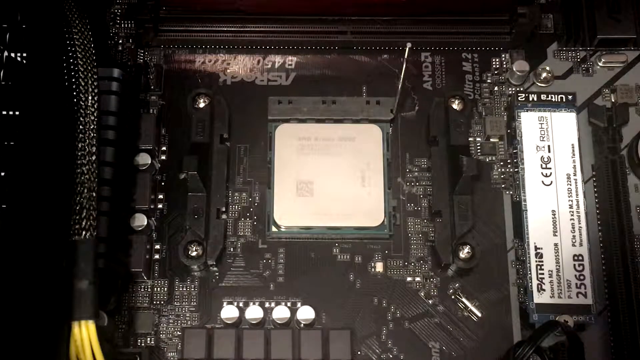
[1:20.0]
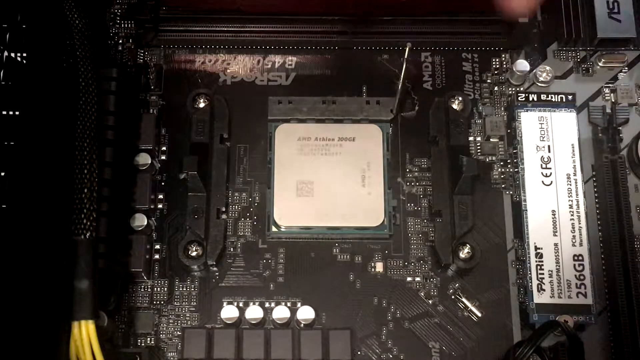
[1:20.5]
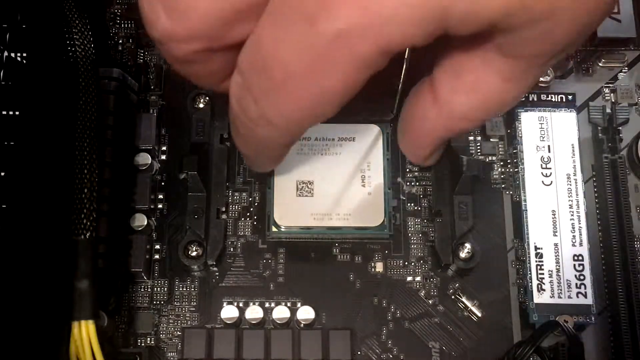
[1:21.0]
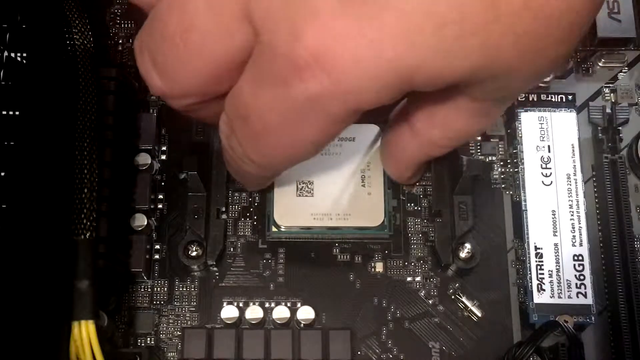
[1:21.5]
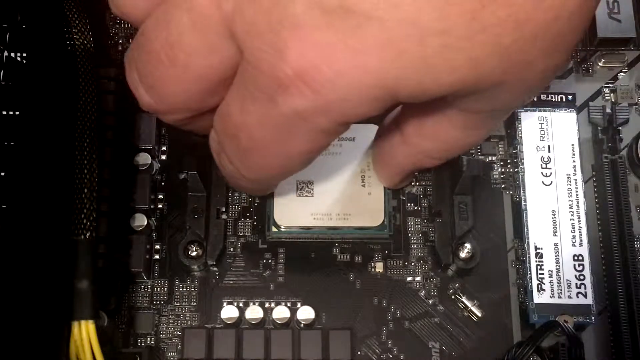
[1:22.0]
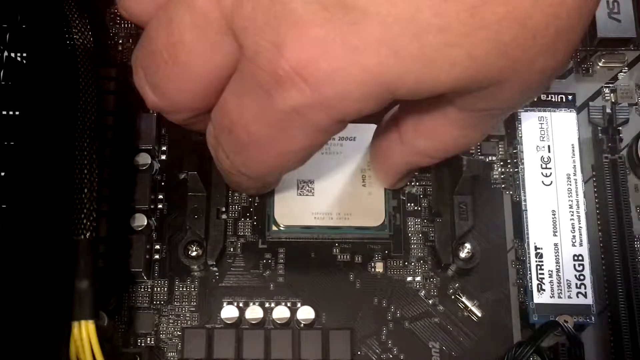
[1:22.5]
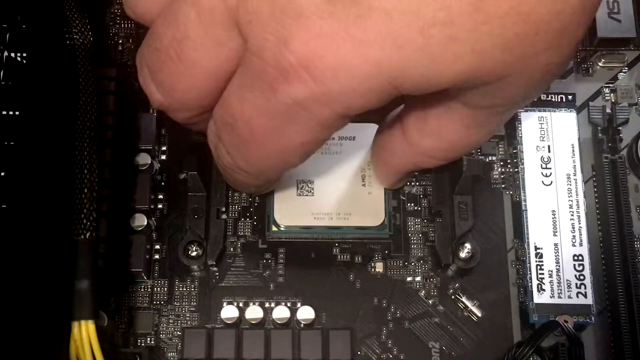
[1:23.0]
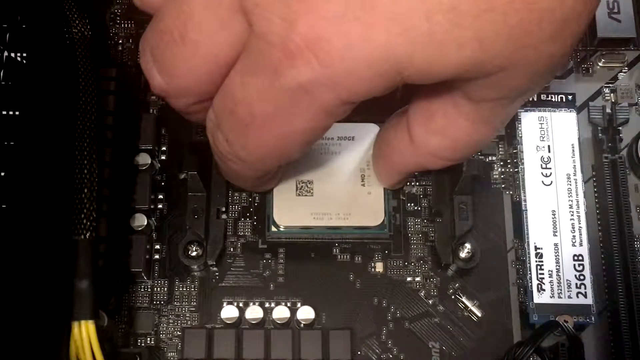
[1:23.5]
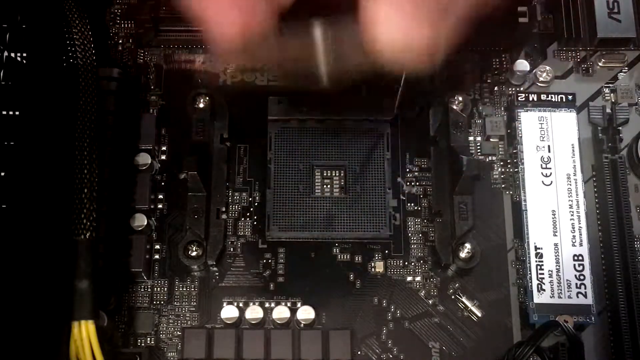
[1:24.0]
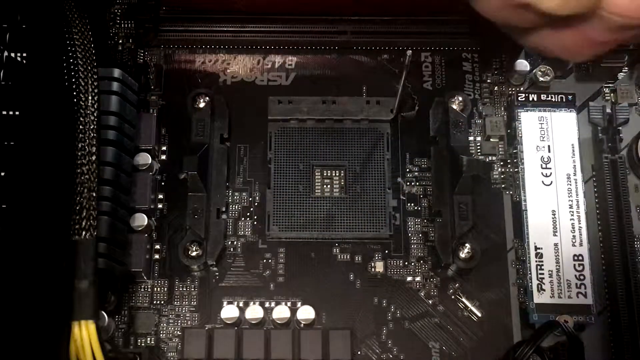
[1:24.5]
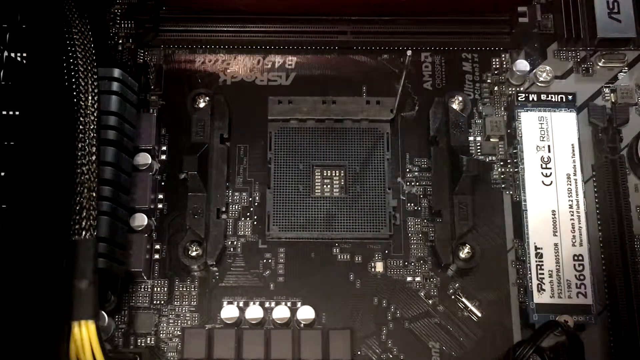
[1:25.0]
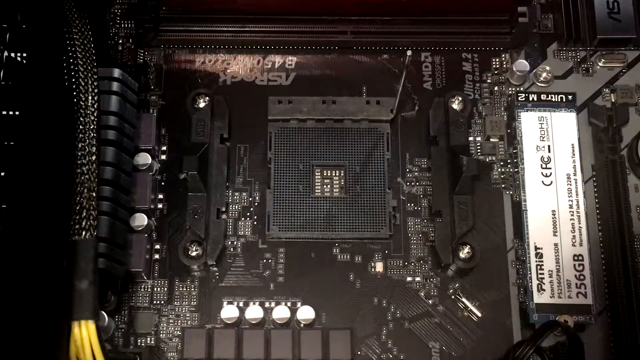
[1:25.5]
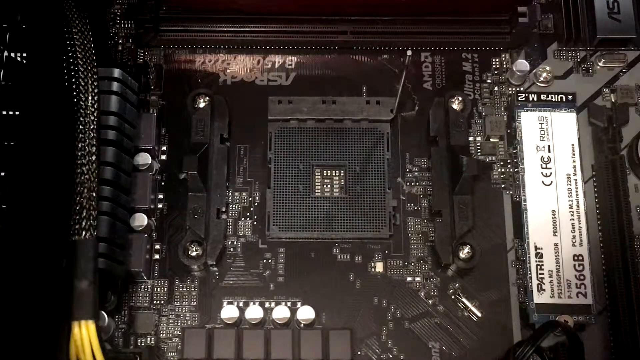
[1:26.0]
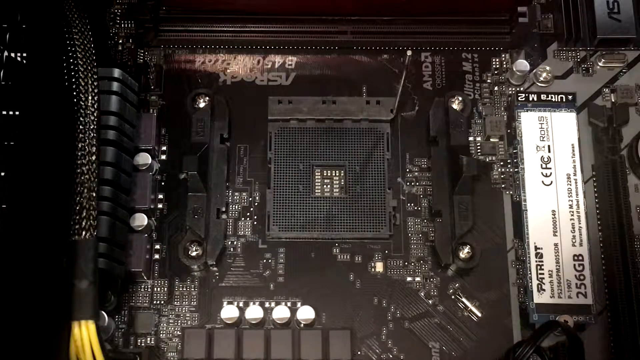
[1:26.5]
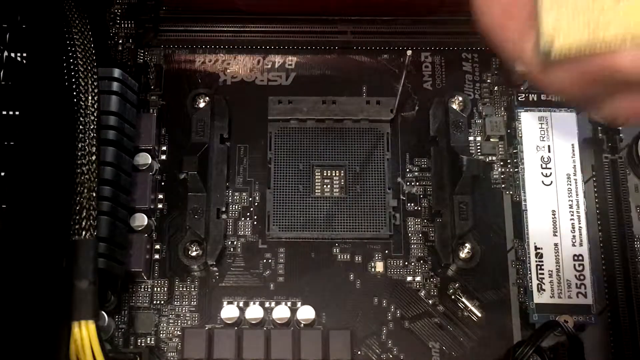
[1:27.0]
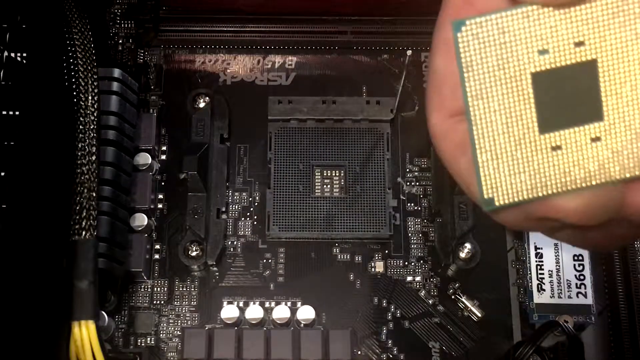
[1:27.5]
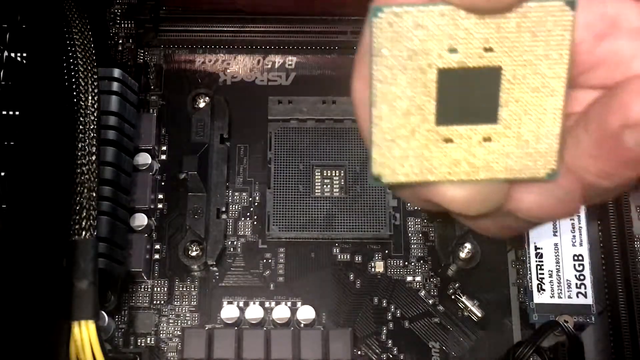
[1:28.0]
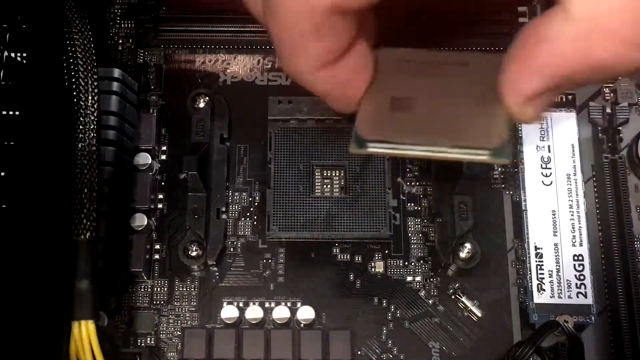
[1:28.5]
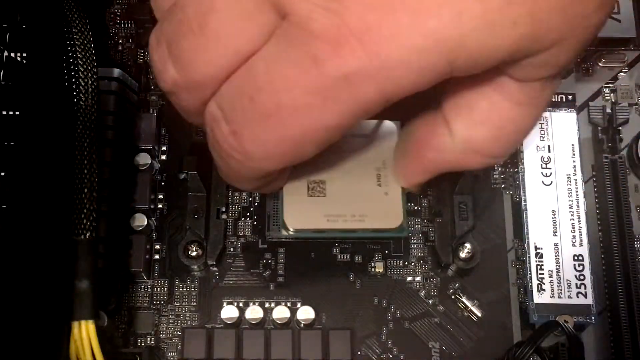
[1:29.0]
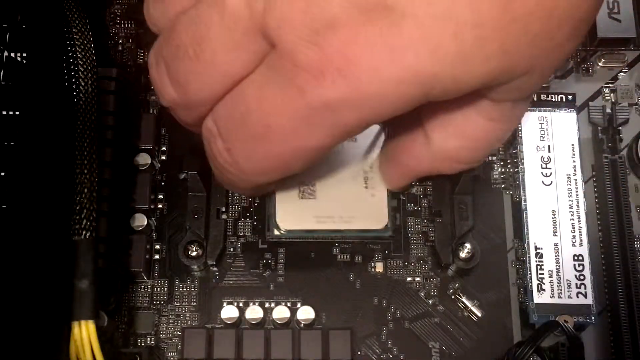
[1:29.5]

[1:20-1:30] The man seems to place his right index finger on the left of the CPU and his thumb on the right of it to pick it up. He slowly wiggles it and pushes it up, taking it out of the frame and leaving only the motherboard area where the CPU was placed, which looks like a black grid. His hand then comes back into the camera, still holding the CPU in his right hand the same way he took it out, now showing the back of the CPU with its golden pins. He now seems to be placing it in.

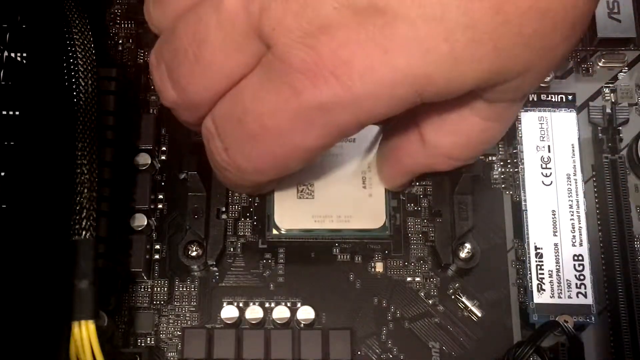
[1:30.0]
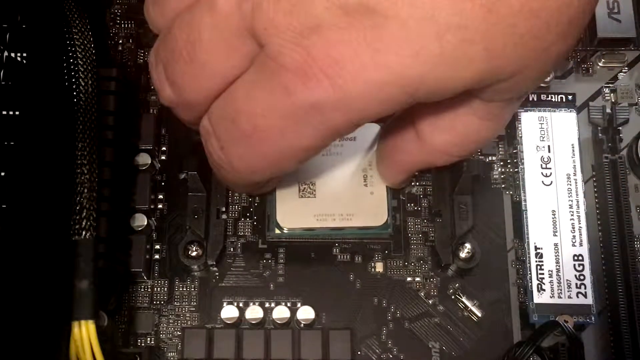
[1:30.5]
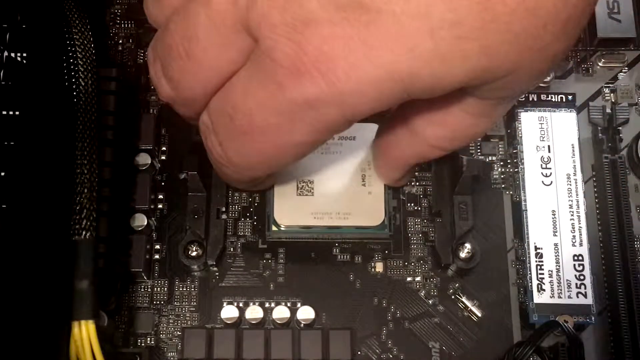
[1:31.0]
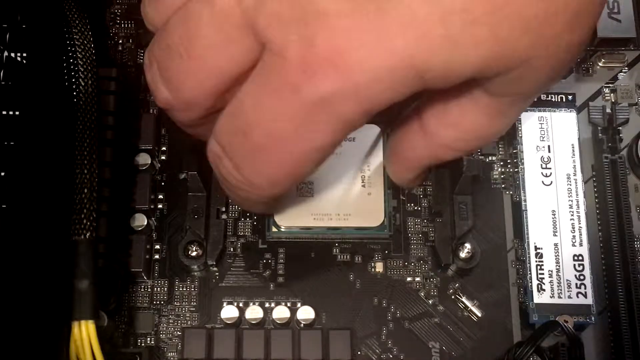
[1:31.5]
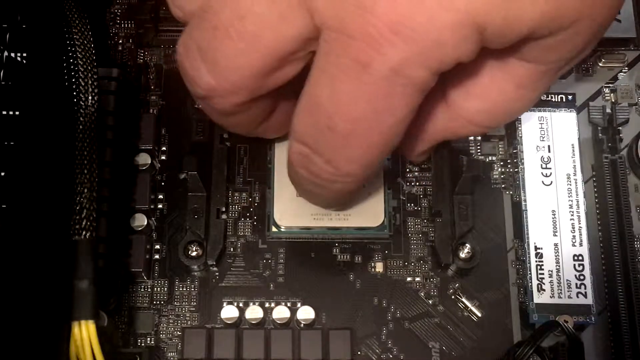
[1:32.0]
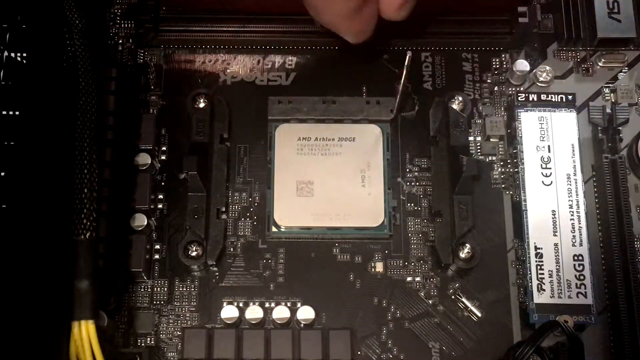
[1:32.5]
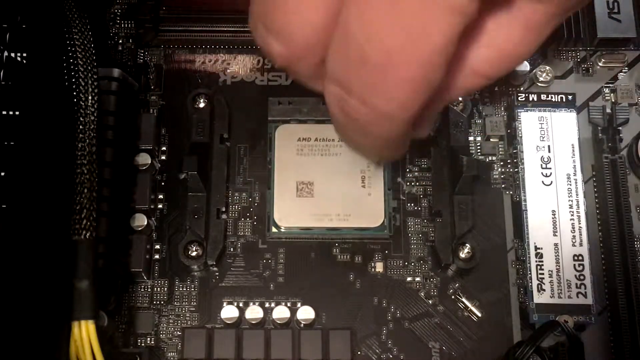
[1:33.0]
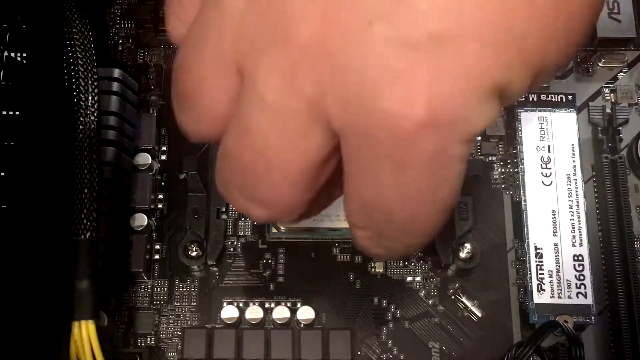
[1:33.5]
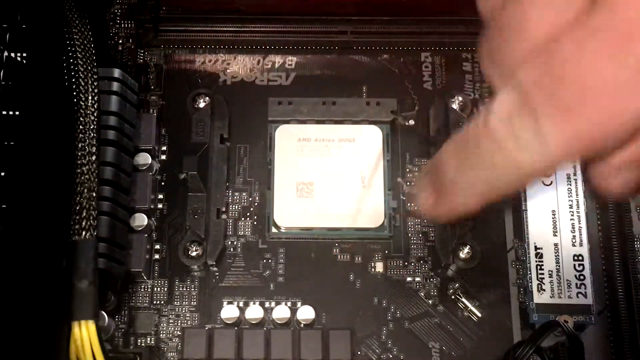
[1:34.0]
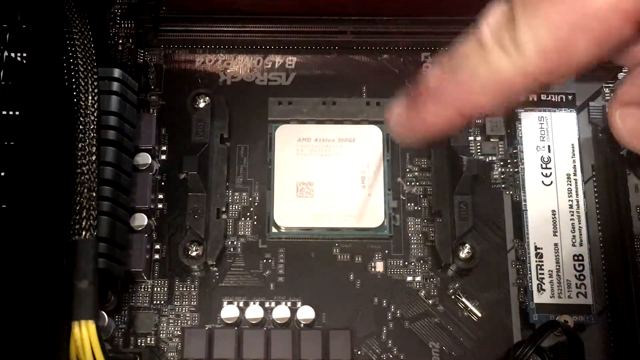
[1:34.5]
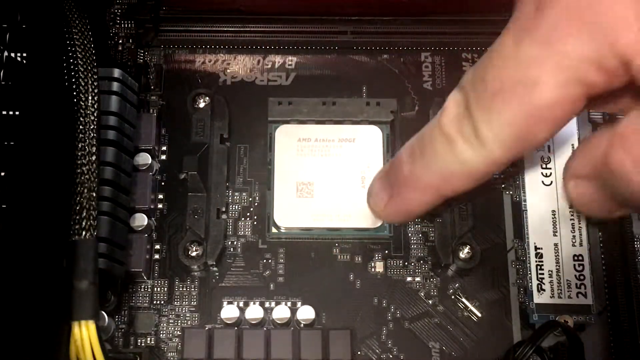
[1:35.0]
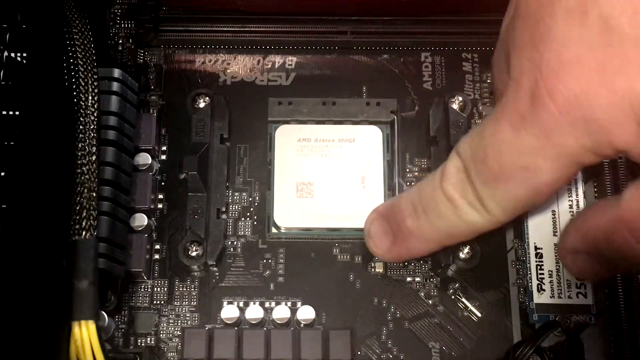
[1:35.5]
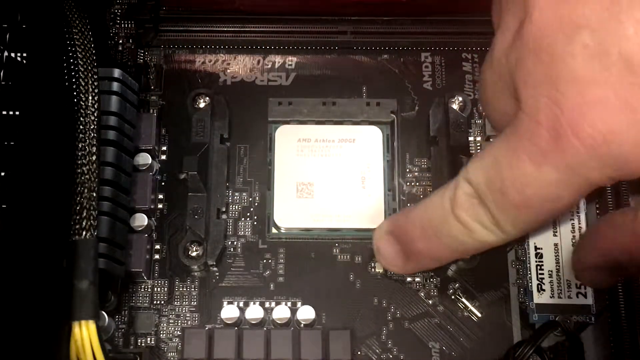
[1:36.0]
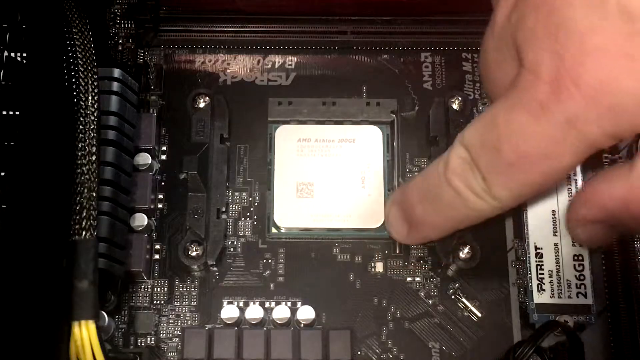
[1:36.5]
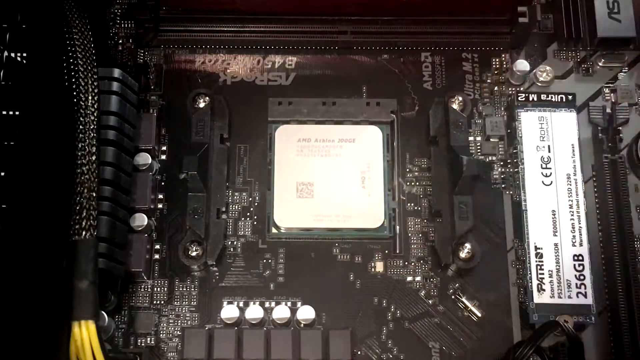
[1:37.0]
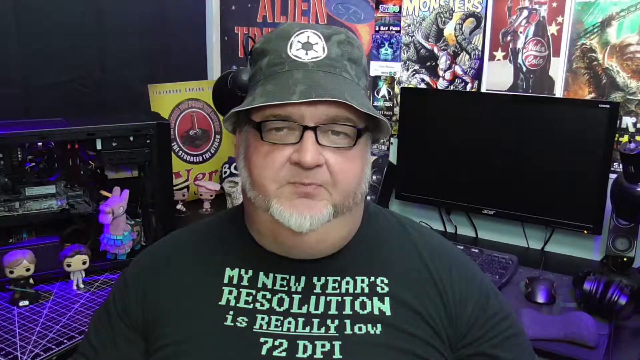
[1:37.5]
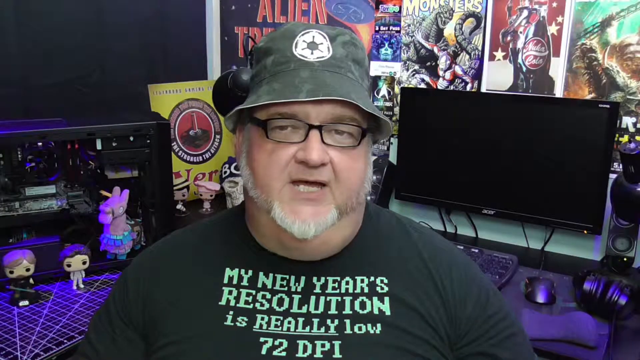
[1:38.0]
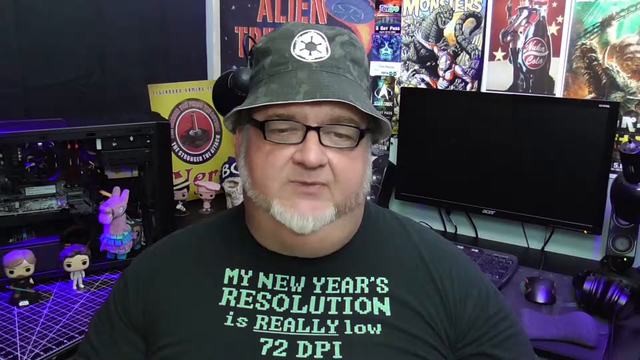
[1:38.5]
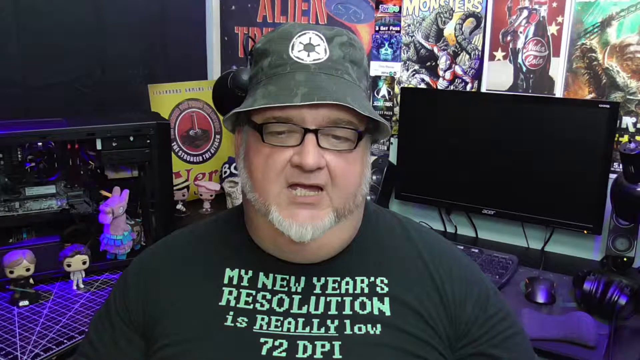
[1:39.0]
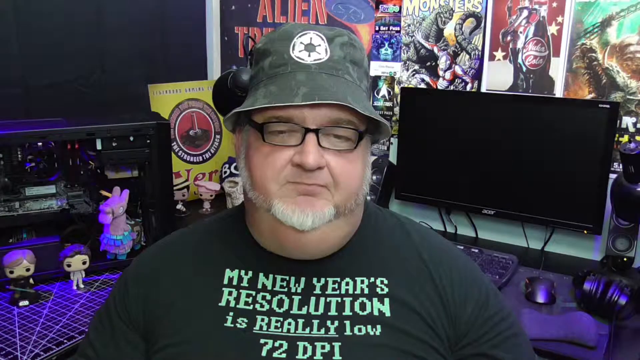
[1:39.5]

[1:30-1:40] The man puts the CPU in, now using what seem to be three fingers: his index and middle fingers on the left side of the CPU and his thumb on the right. He very slowly and gently puts it down on the correct area of the motherboard and gives it a little tap. With his right index finger he then slowly moves the clutch down to lock it in. Very briefly at the end, the video cuts back to him speaking, still seeming to read while he talks.